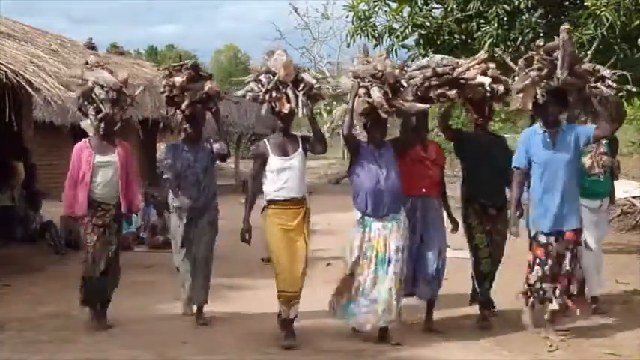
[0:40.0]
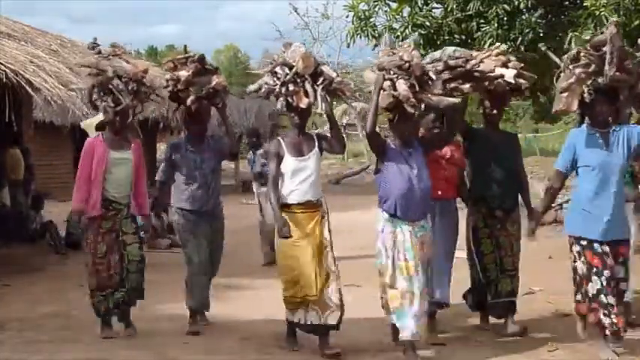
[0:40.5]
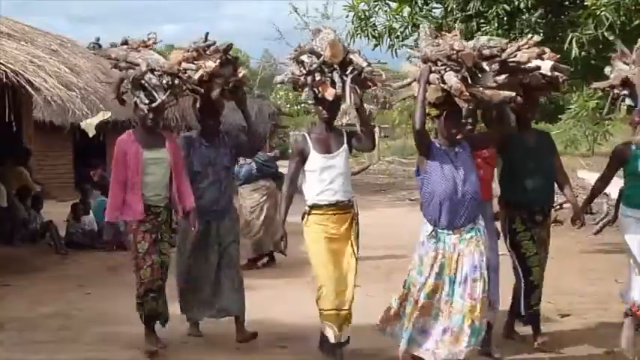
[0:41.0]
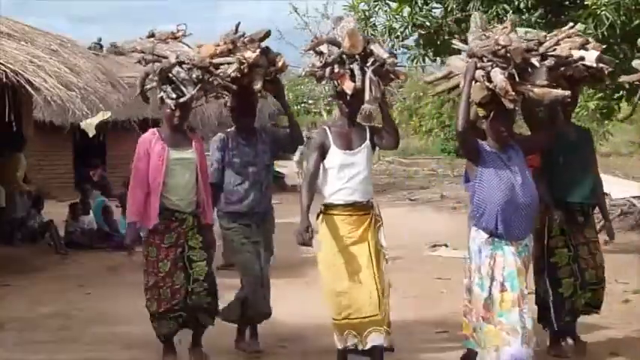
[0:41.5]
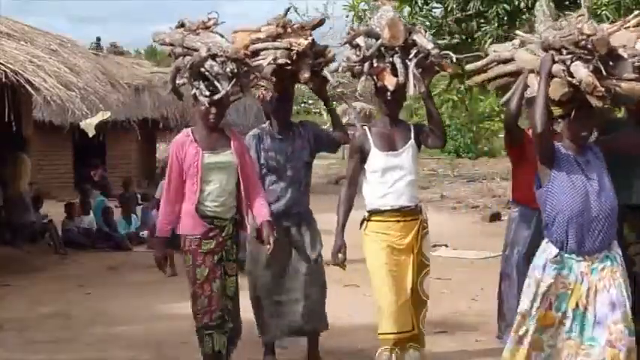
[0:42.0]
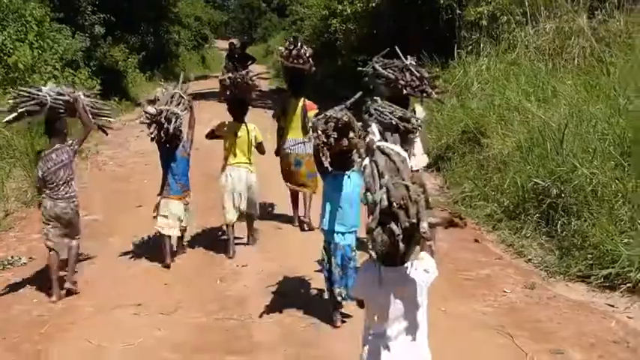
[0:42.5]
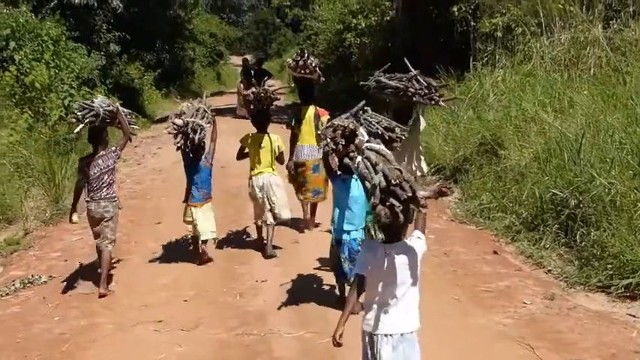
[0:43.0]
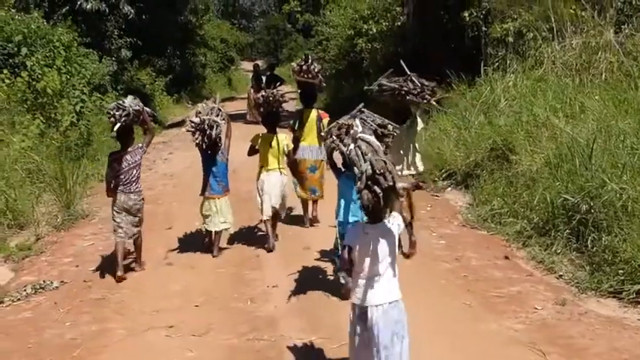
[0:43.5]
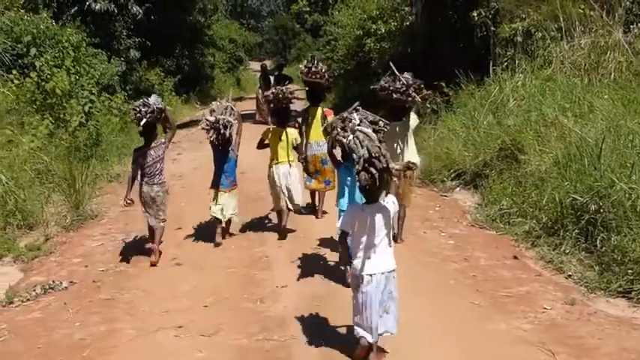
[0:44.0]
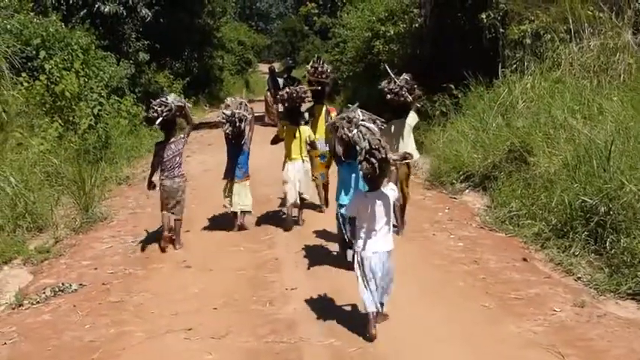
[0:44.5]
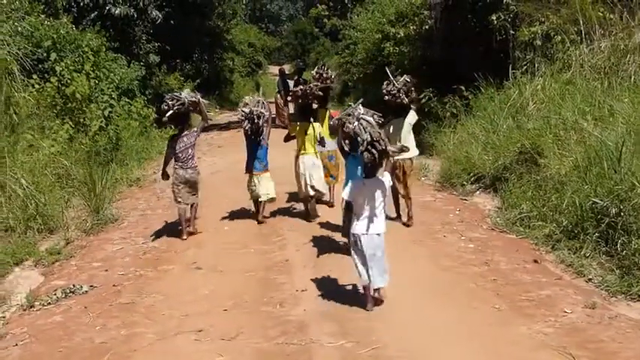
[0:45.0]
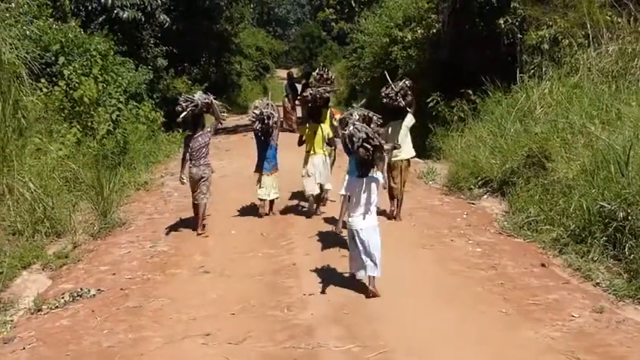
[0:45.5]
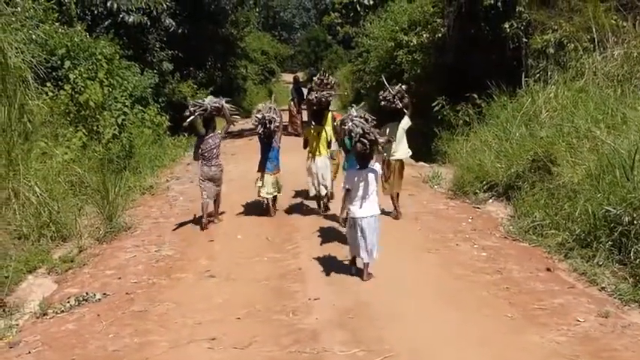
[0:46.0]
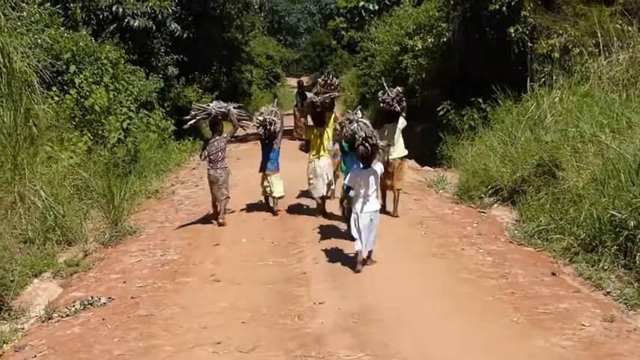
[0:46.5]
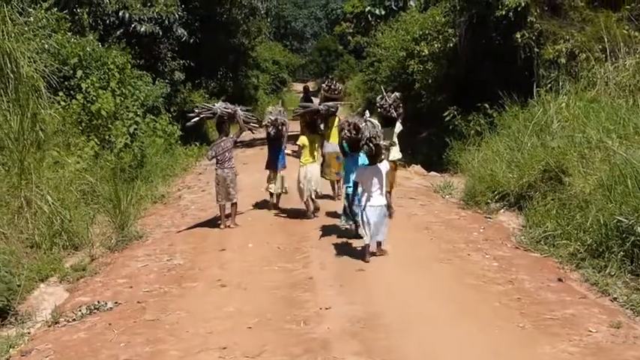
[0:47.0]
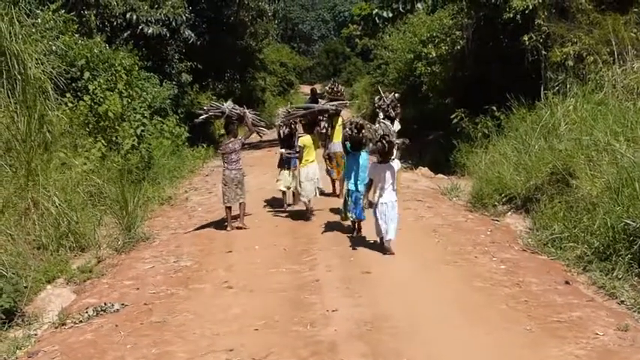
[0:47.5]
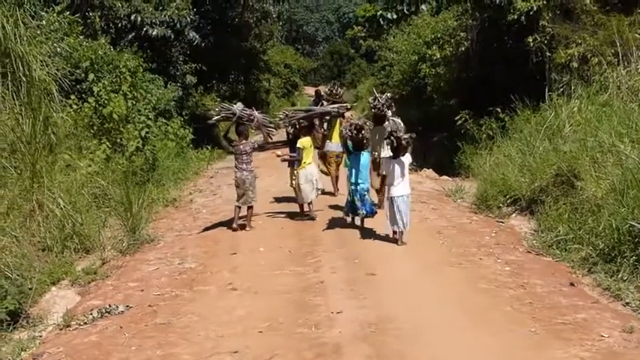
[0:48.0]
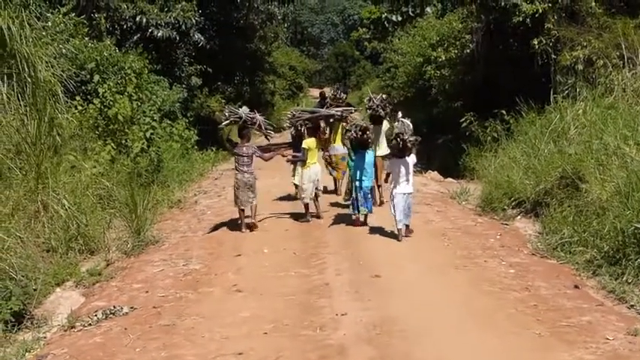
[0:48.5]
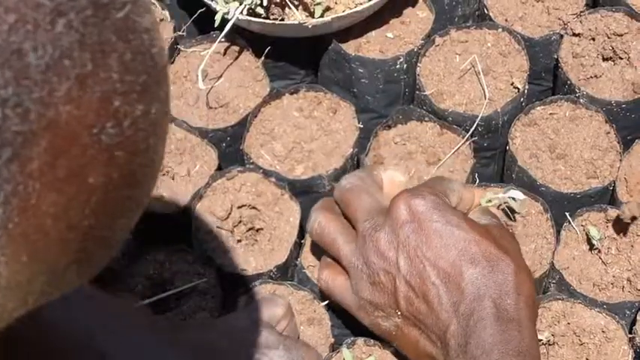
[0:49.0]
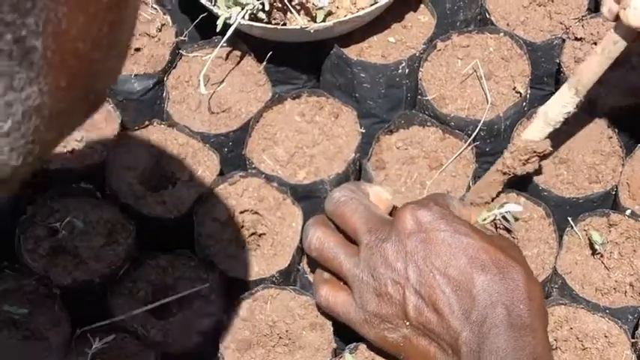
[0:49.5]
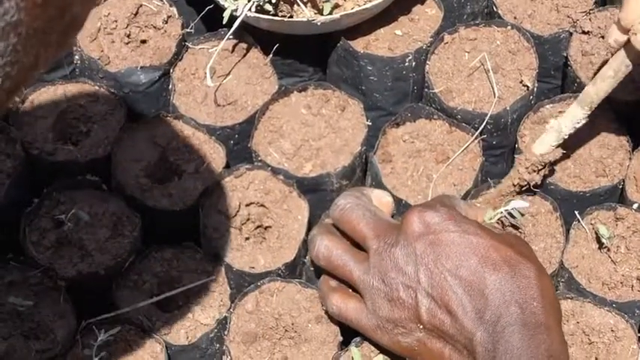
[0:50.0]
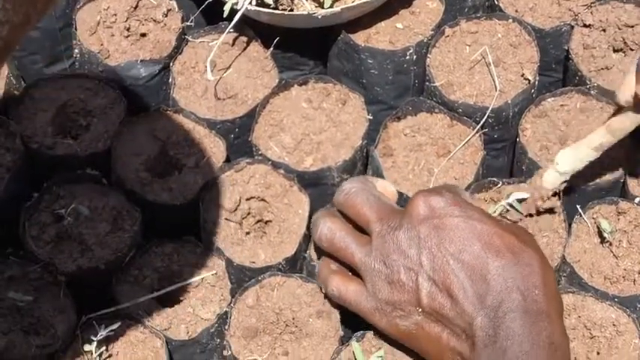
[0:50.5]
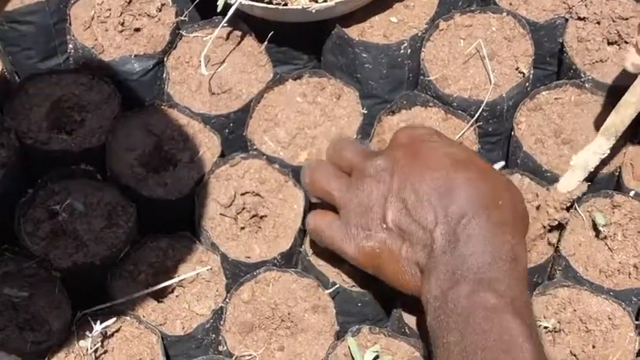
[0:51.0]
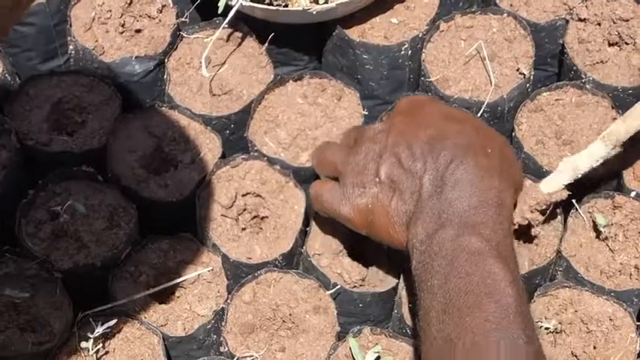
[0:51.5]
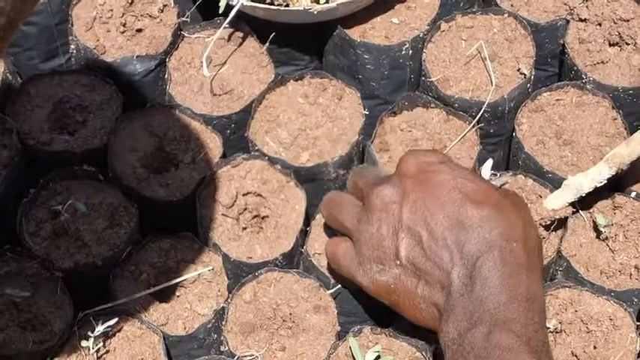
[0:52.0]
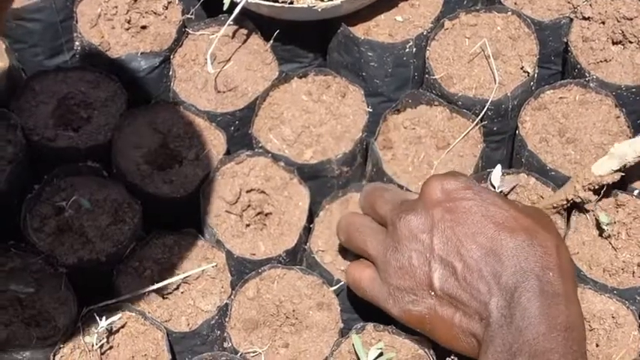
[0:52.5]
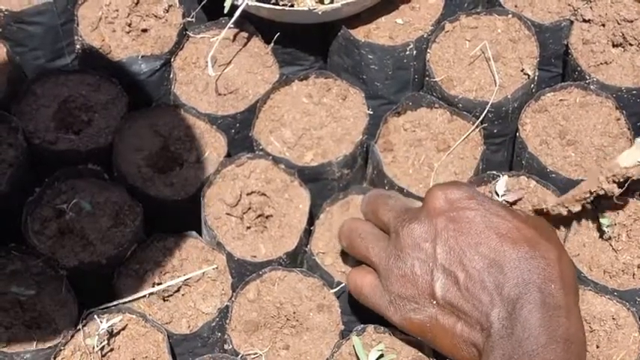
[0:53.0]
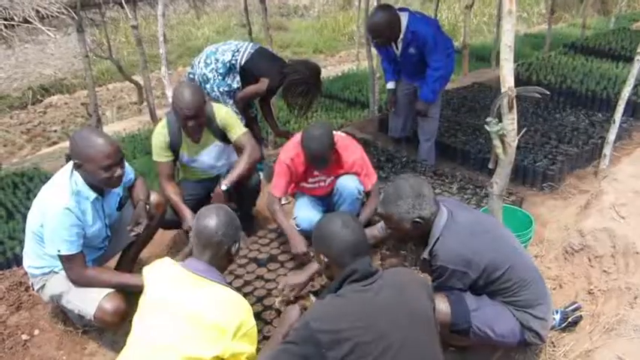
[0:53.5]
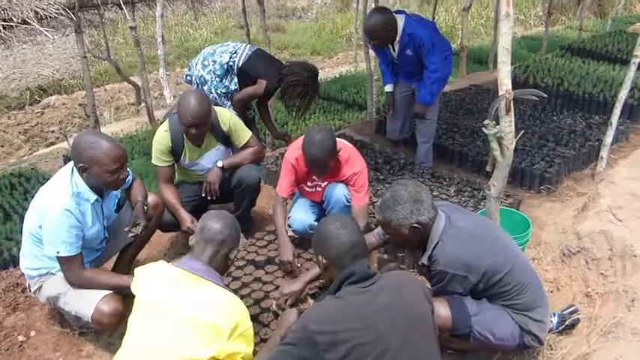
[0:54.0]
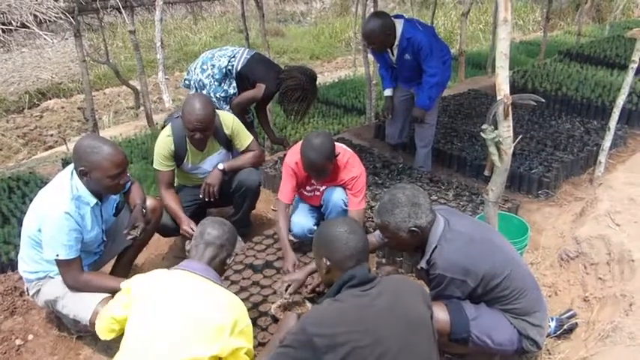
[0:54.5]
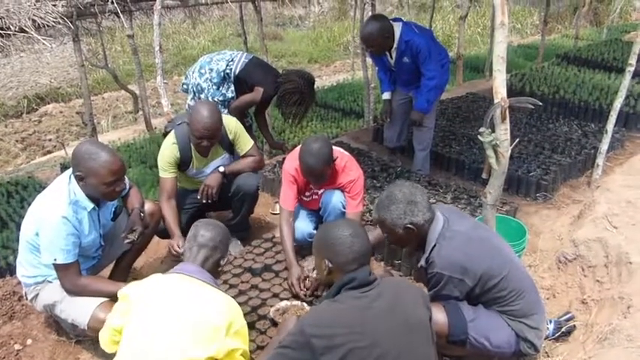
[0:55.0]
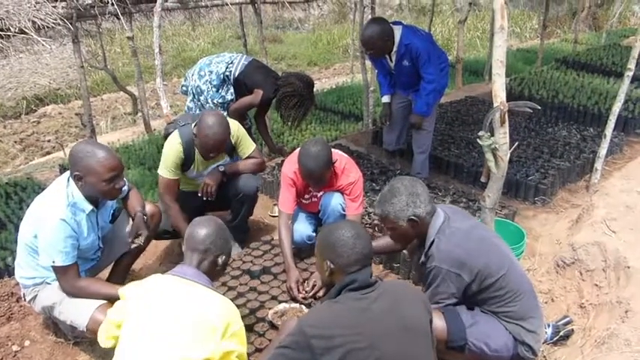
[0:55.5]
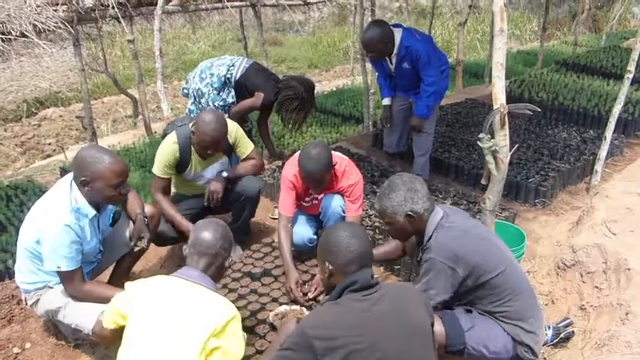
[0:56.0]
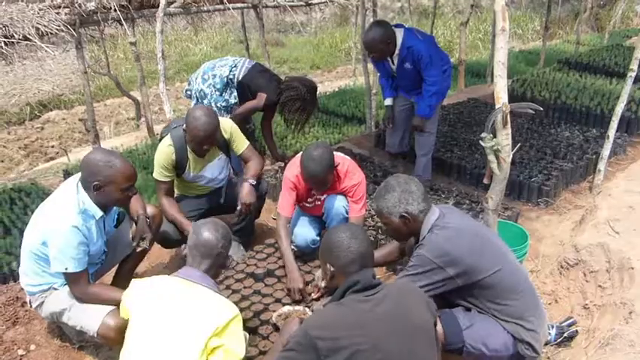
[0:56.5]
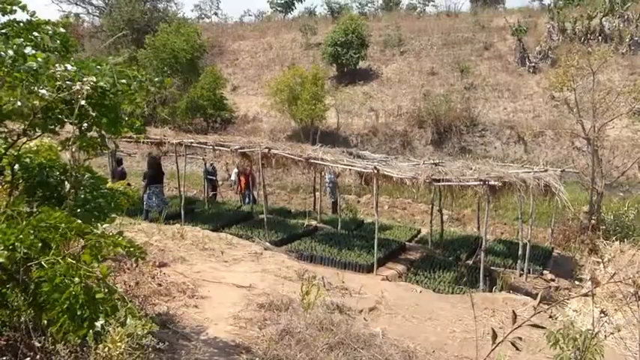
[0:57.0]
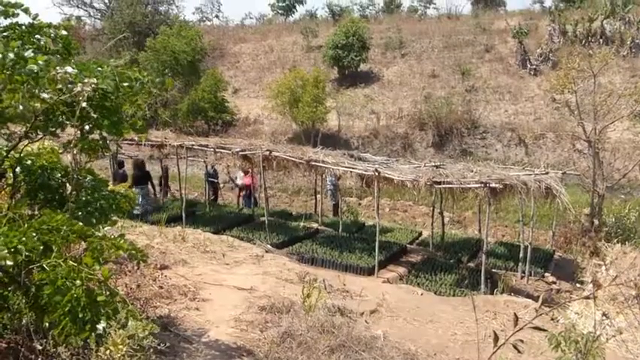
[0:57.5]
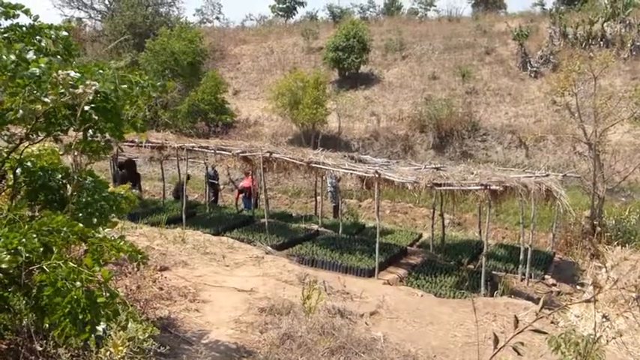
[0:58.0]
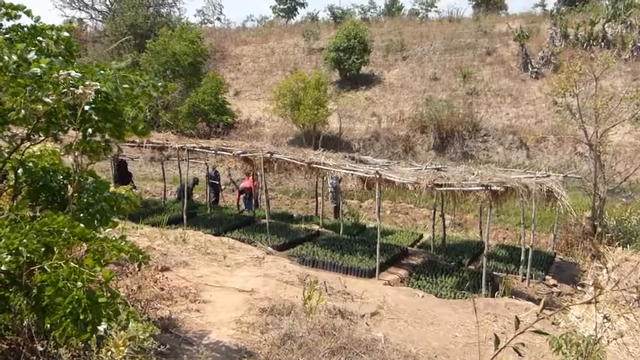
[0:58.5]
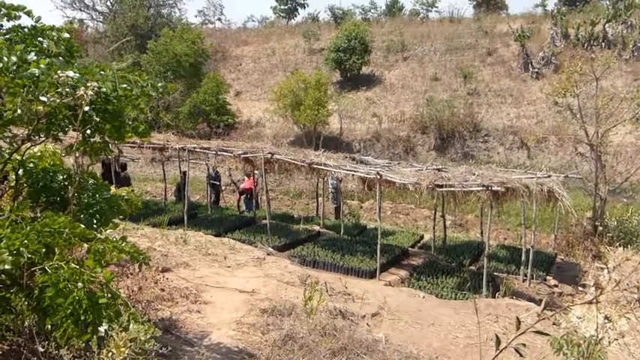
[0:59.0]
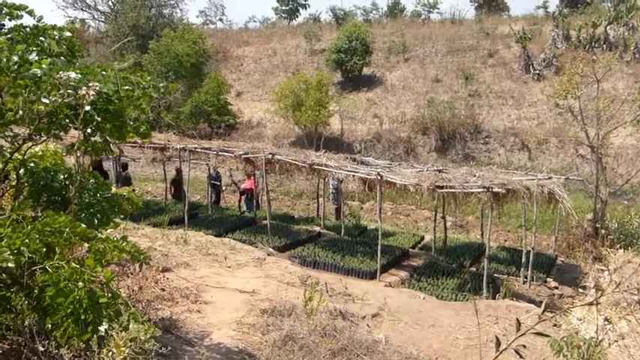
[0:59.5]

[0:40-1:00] A group of women, who seem to be of many ages, some younger than others, carry wood branches on their heads as they walk down a dirt path away from the camera. A bunch of kids also carry wood on their heads and walk away from the camera. Next, some men seem to be planting some kind of plants, planting different crops together. The crops are under a protection from the sun built with wood: wooden roofs are over the planters, perhaps so the sun does not hit them too hard. Around the planters the fields are kind of dried, suggesting this may be a very hot place.